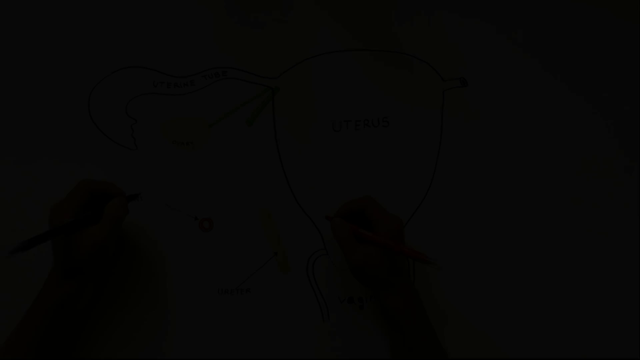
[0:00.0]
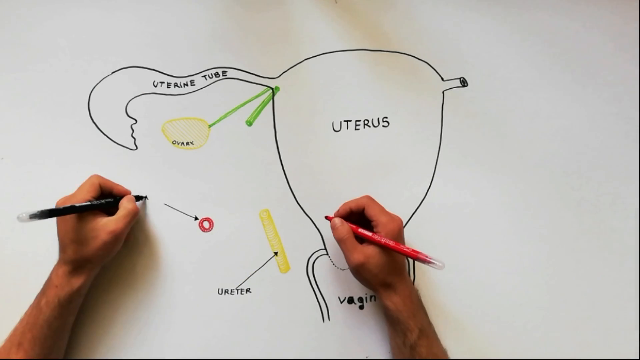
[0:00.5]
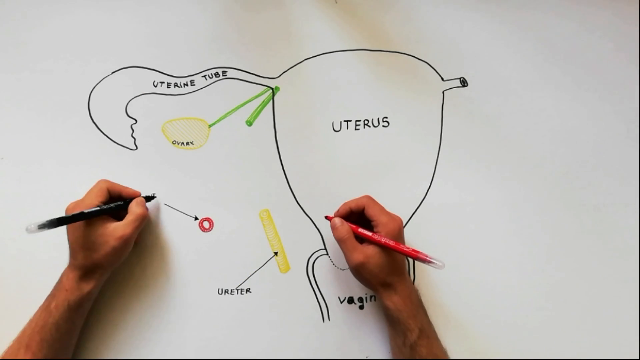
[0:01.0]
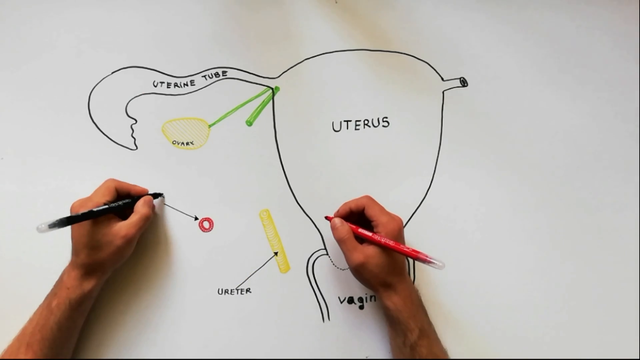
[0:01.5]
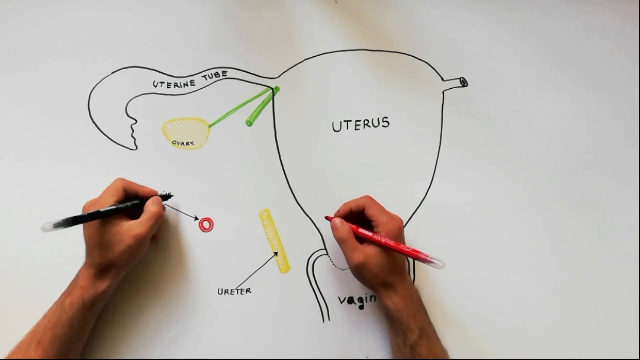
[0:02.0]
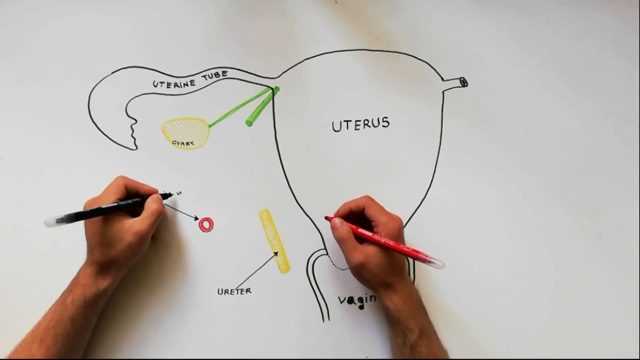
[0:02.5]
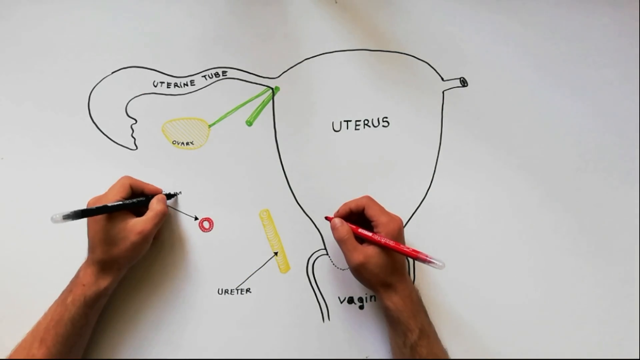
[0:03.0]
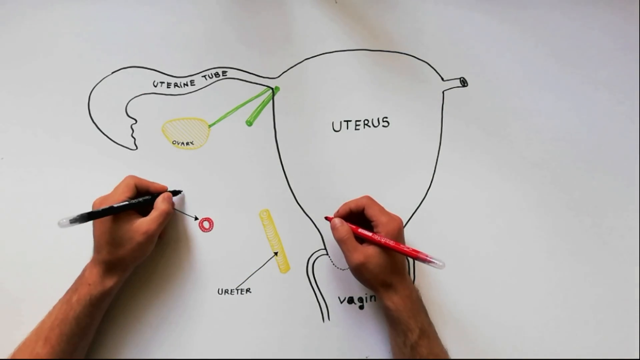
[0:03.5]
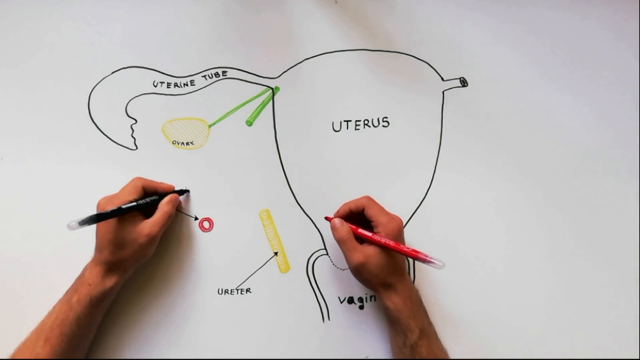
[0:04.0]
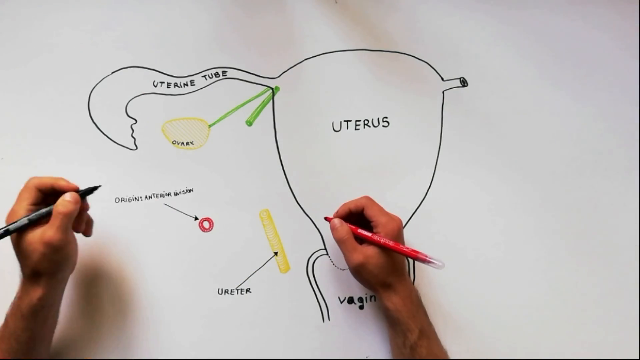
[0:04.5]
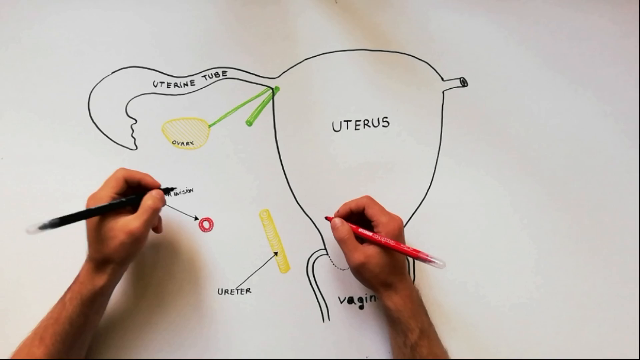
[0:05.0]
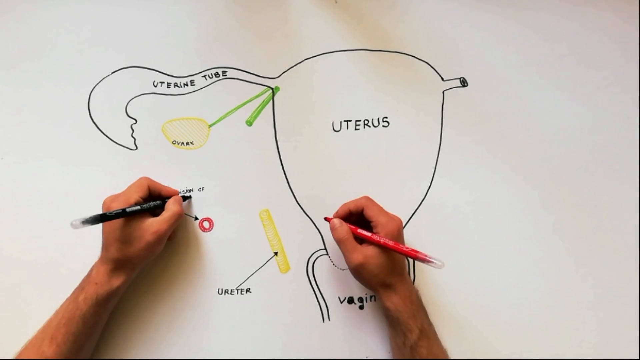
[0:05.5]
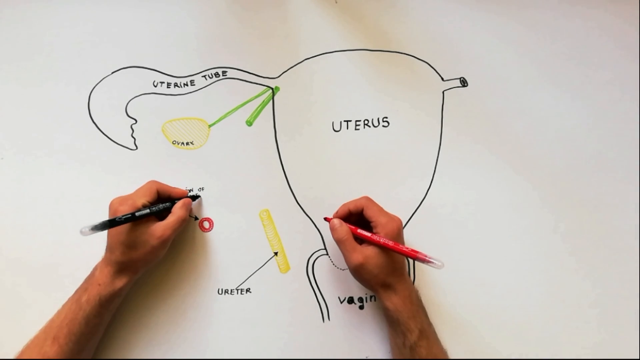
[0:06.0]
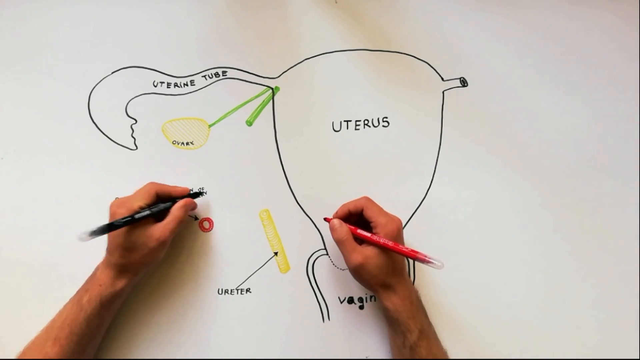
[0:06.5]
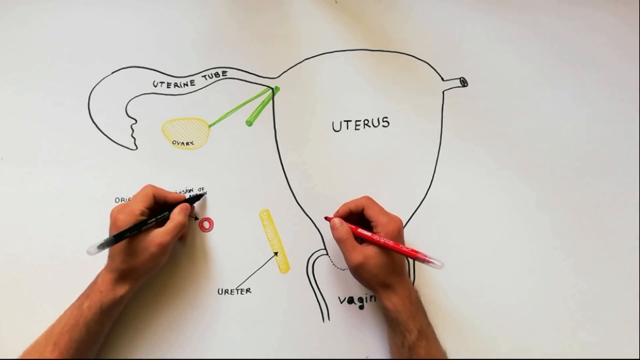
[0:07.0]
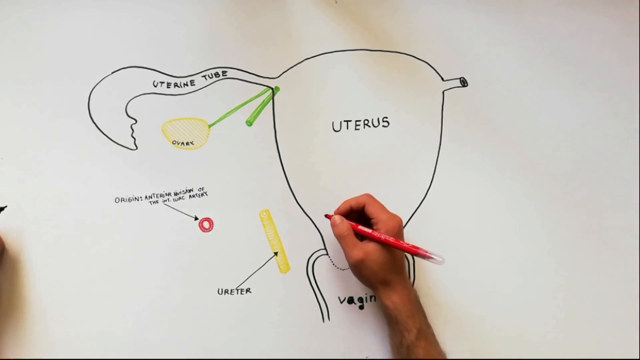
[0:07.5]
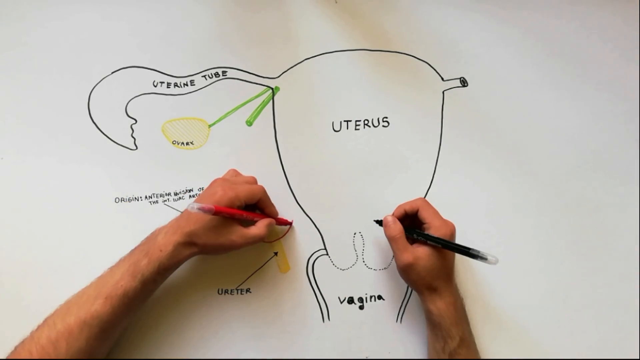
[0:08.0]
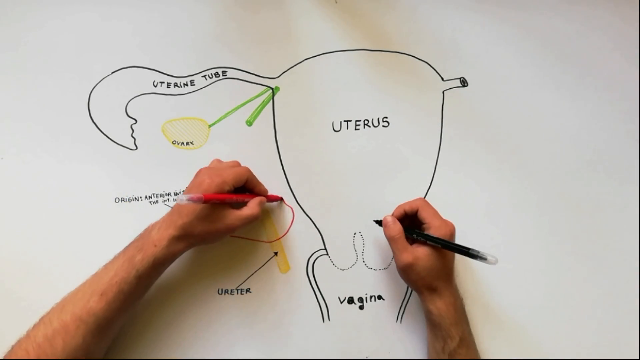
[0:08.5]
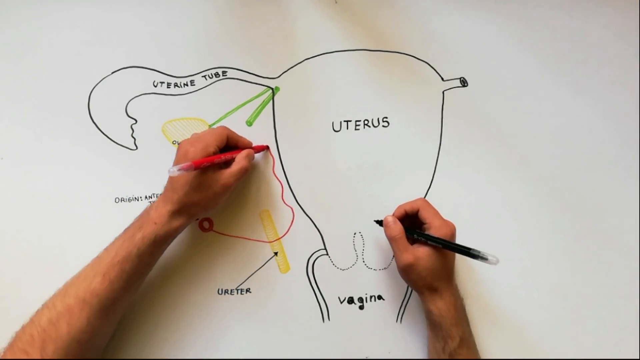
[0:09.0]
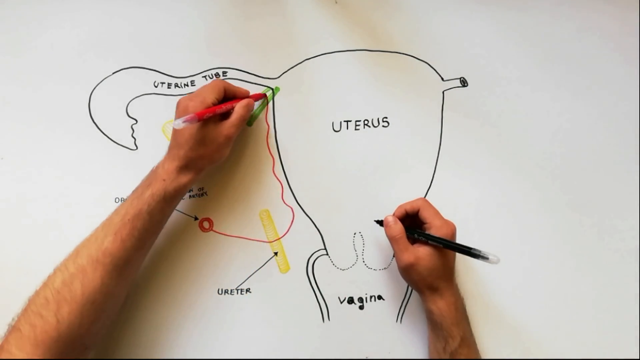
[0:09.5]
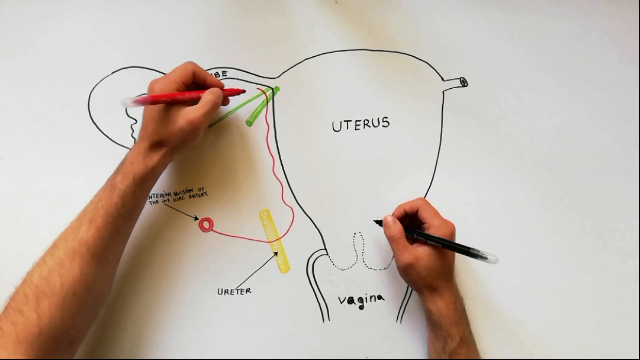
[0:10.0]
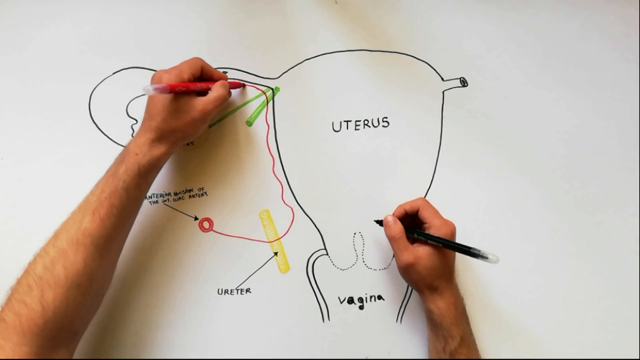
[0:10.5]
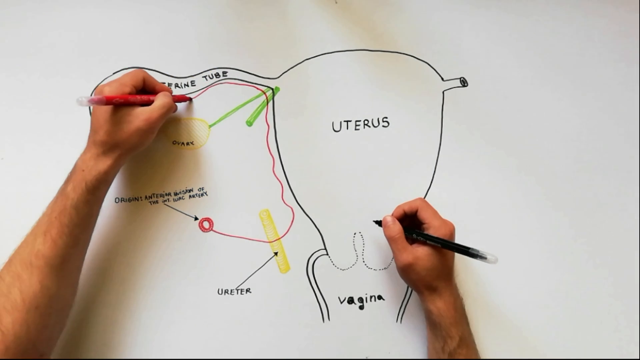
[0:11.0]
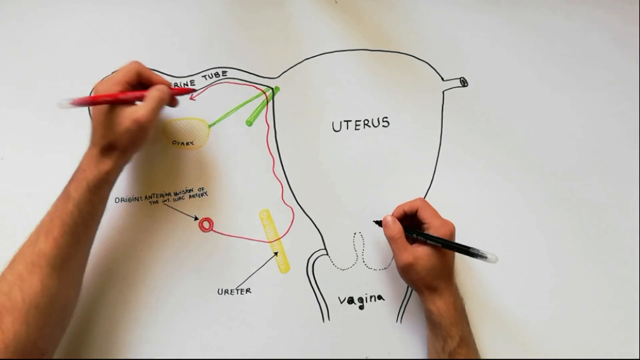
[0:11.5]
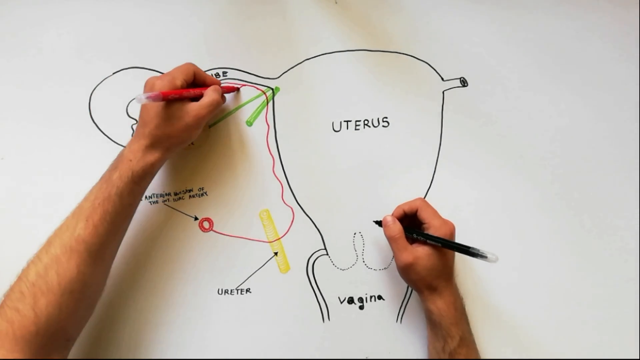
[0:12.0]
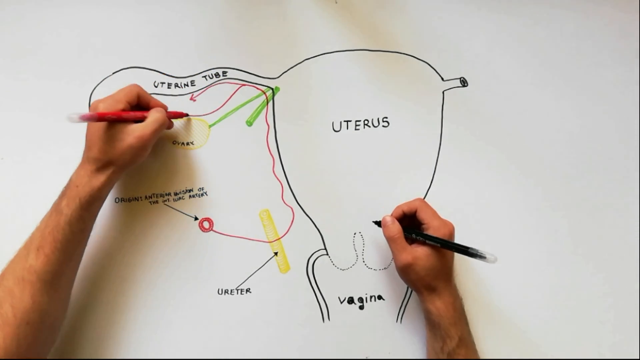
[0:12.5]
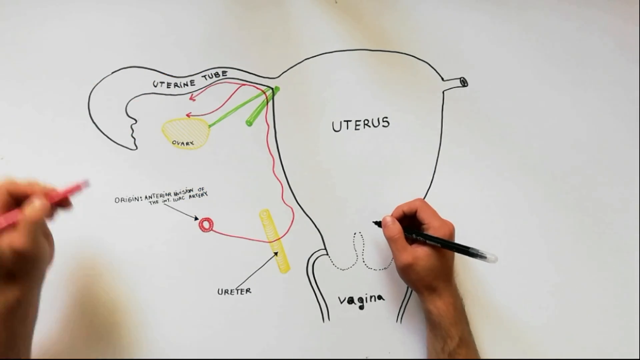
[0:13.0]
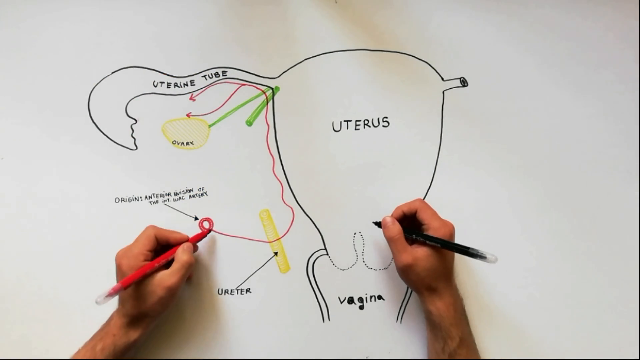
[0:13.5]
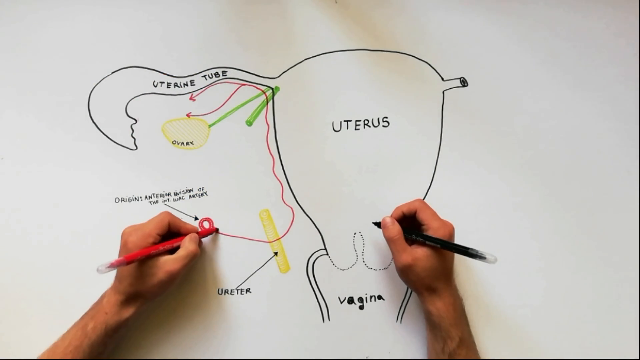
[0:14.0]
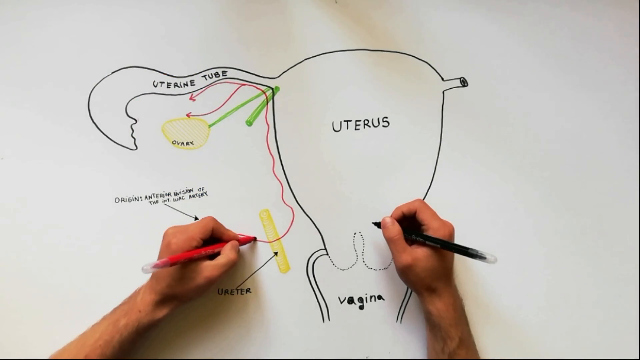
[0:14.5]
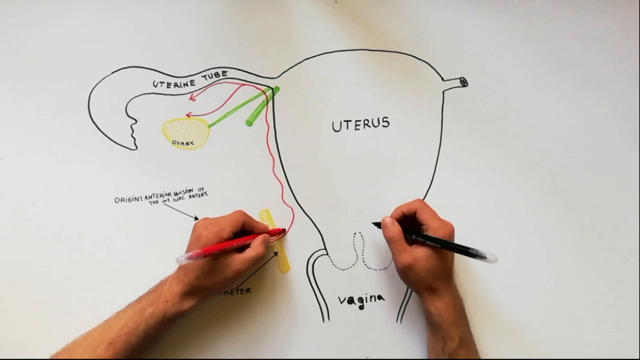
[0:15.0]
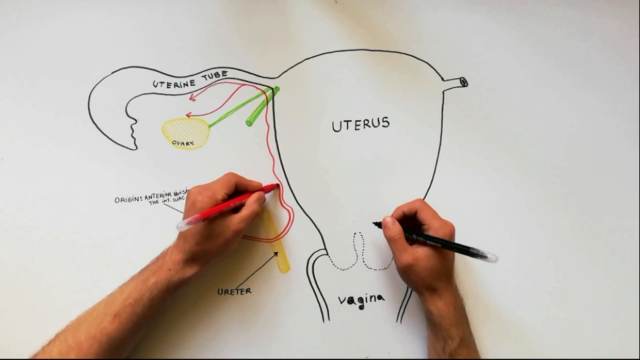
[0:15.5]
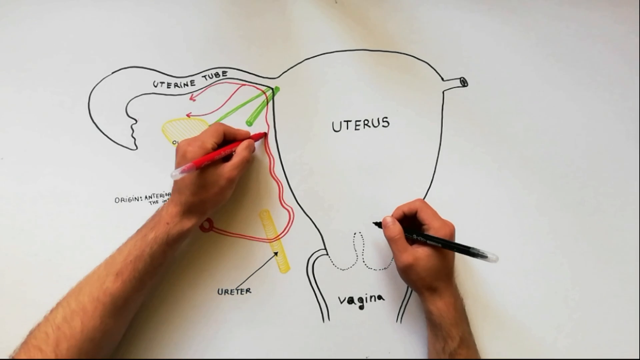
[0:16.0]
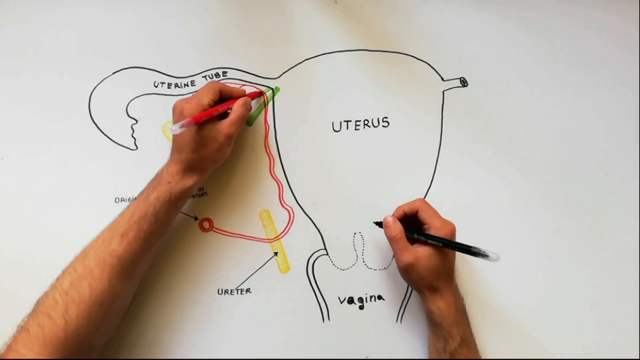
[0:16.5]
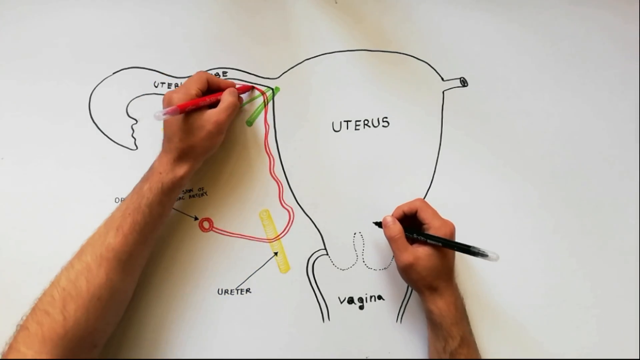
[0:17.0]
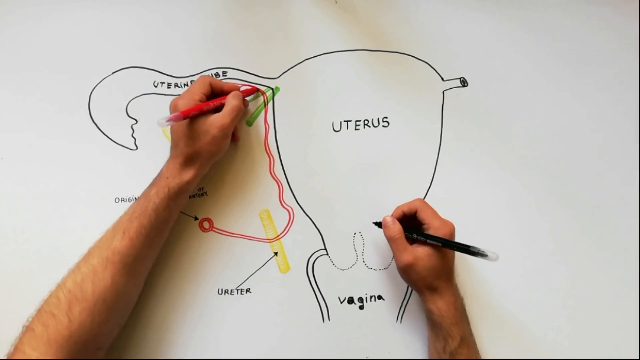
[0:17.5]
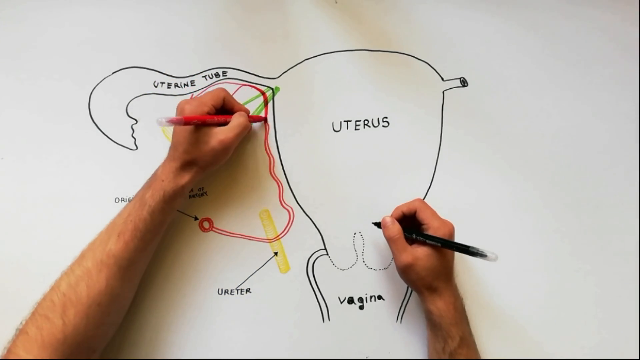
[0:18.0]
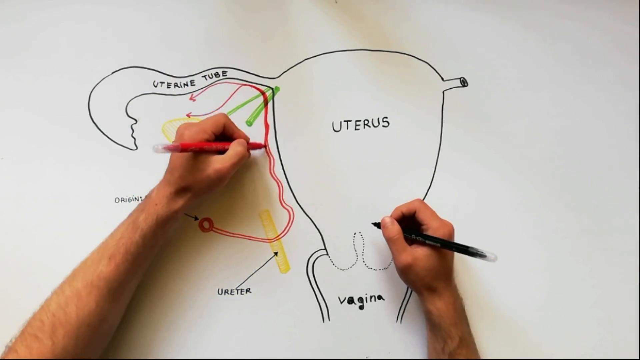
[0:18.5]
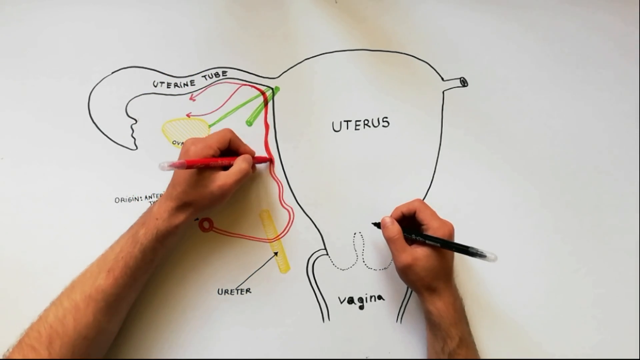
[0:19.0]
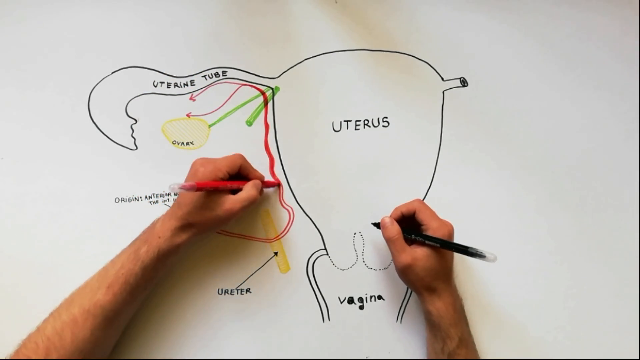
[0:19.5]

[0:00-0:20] A white table is filmed from above, facing down, with two arms resting on it. The left hand holds a black marker and the right hand holds a red marker. On the board they are drawing on is an oval shape with the word "uterus" inside it. Coming off the top of the shape is a small tube drawn in black, and inside that tube it says "uterine tube". Underneath that, a small red circle is drawn. The person's left hand now has the red pen and draws a line from that circle up along the outside of the uterus and the outside of the uterine tube, then colors in that tube. Underneath the drawing of the uterus, two tubes come off the side, with the word "vagina" between them. To the left of that is a small yellow tube, with the word "ureter" underneath it and a black arrow going from that word to the picture.